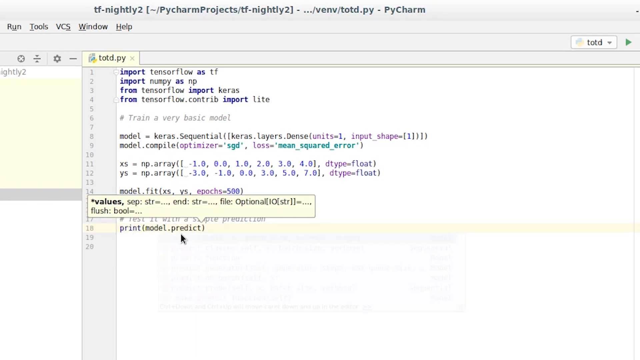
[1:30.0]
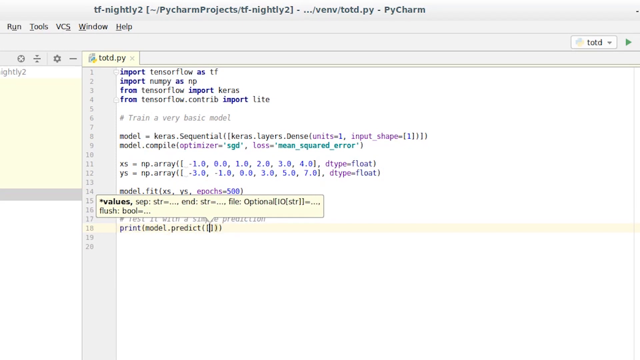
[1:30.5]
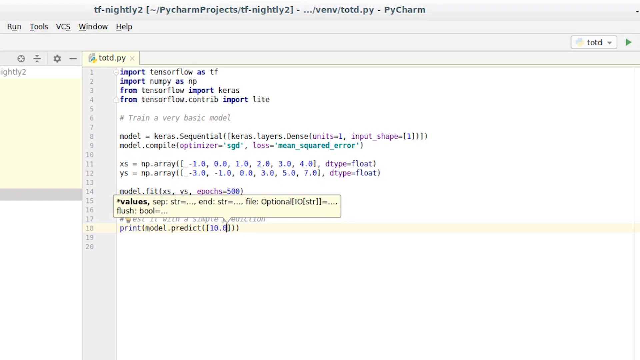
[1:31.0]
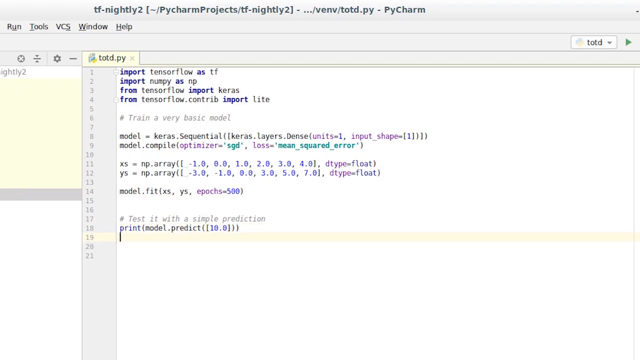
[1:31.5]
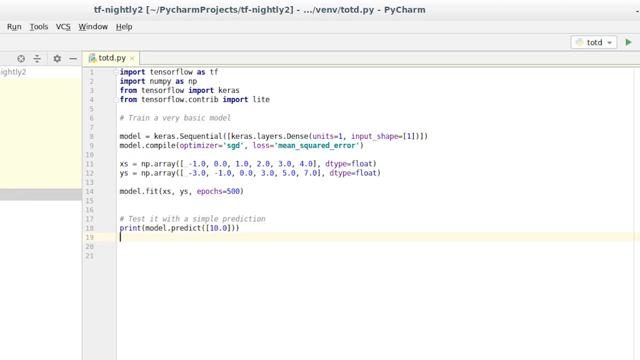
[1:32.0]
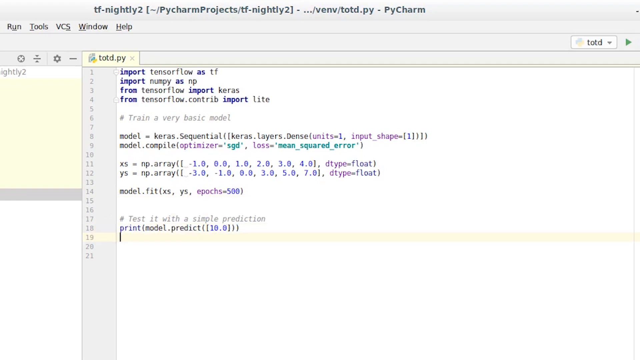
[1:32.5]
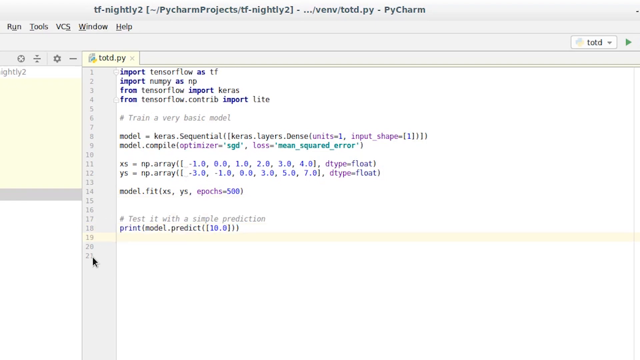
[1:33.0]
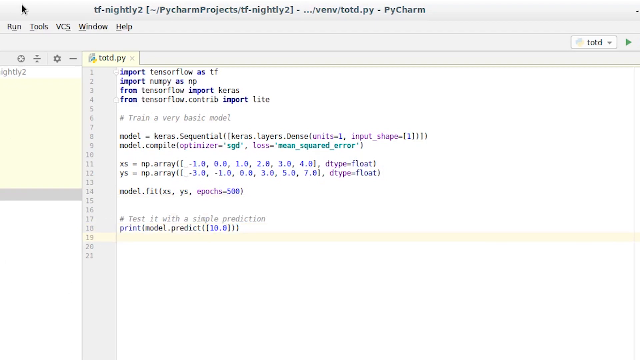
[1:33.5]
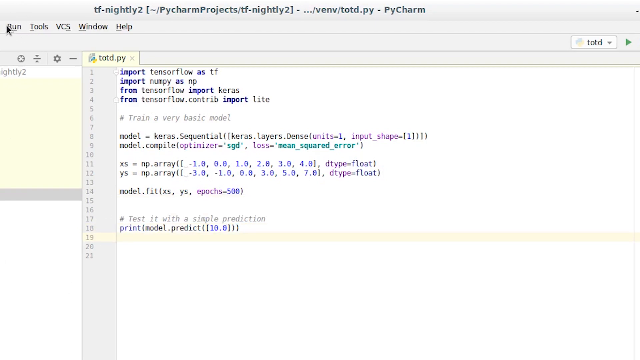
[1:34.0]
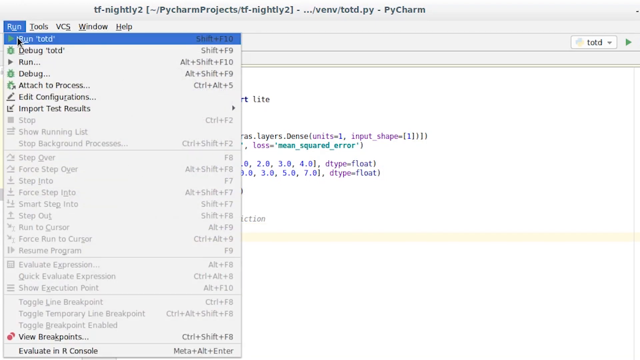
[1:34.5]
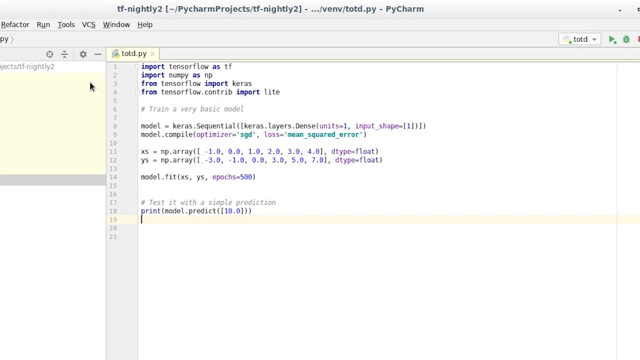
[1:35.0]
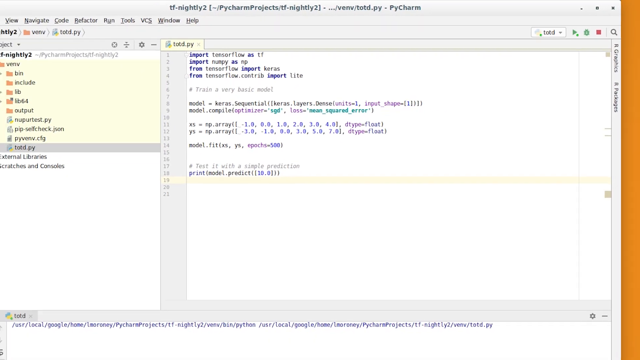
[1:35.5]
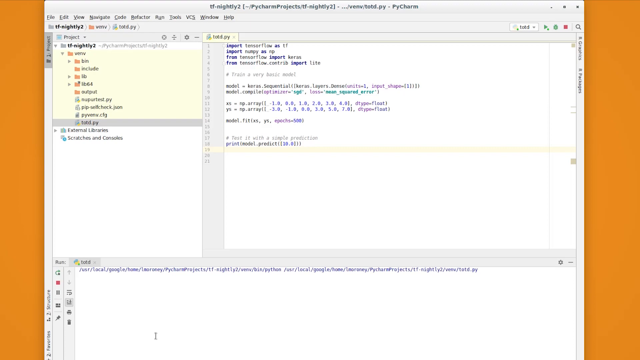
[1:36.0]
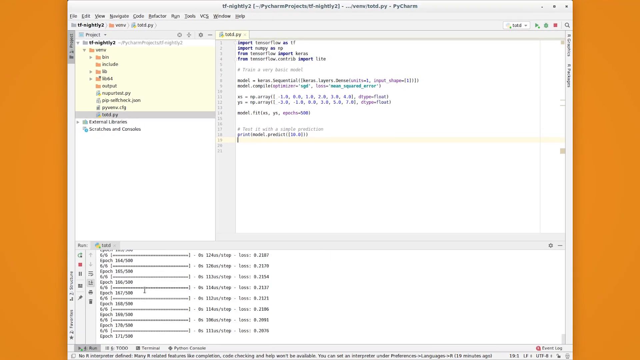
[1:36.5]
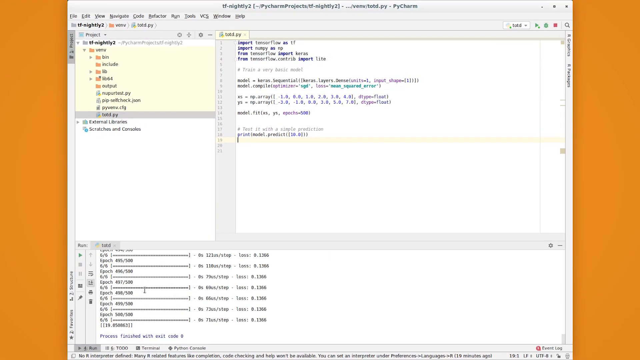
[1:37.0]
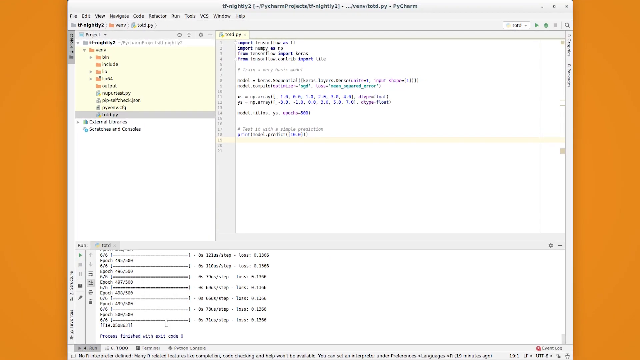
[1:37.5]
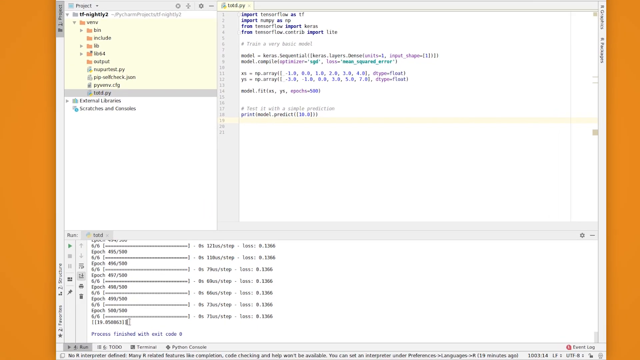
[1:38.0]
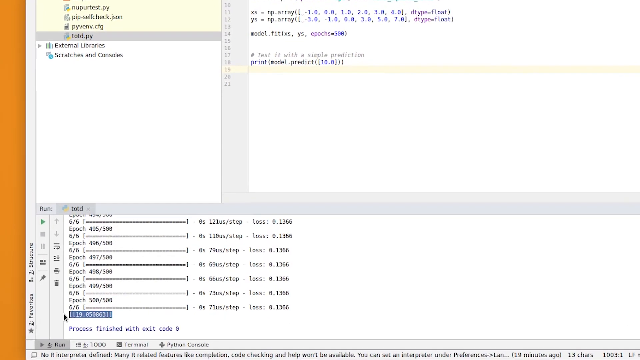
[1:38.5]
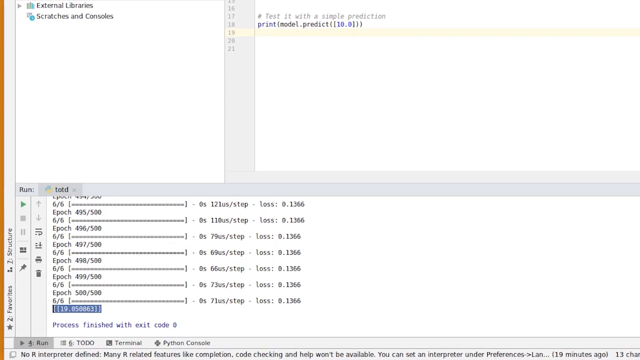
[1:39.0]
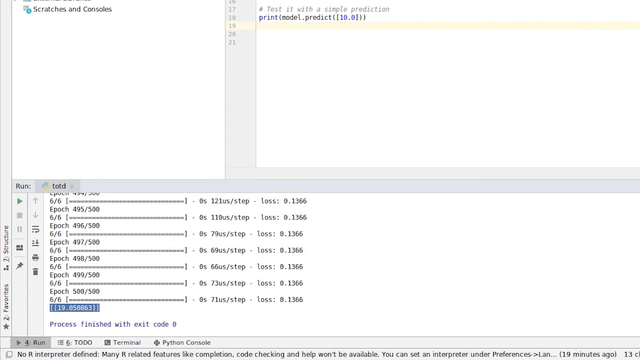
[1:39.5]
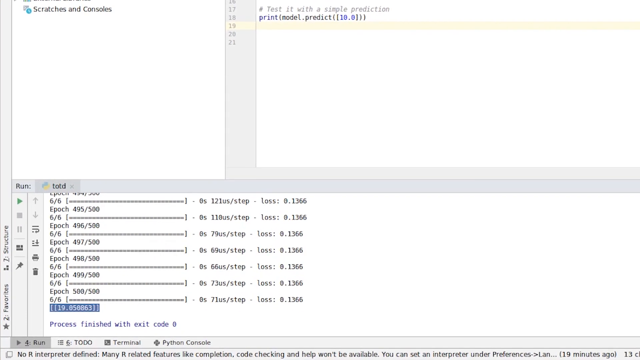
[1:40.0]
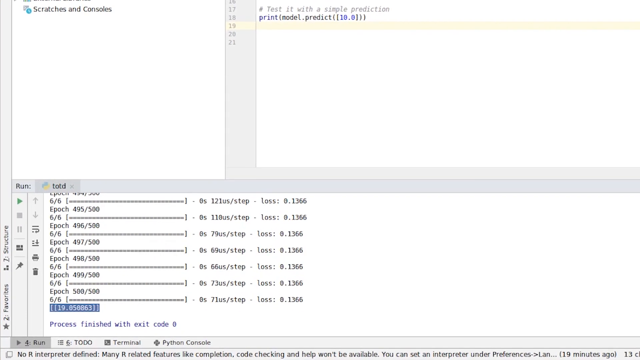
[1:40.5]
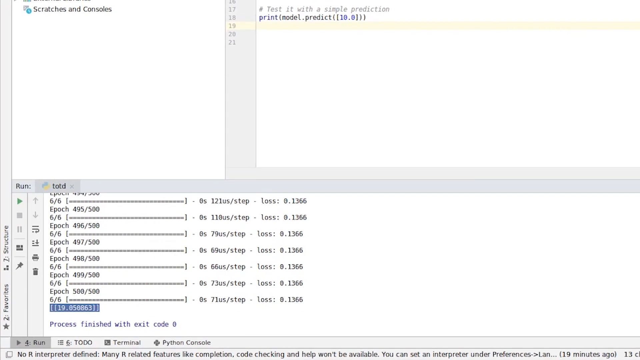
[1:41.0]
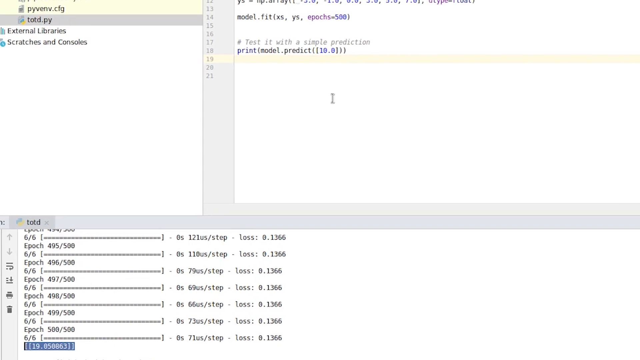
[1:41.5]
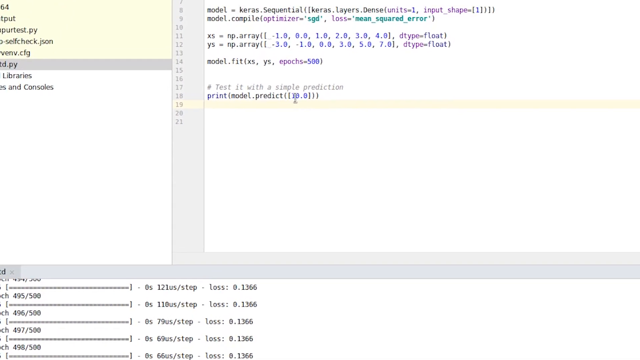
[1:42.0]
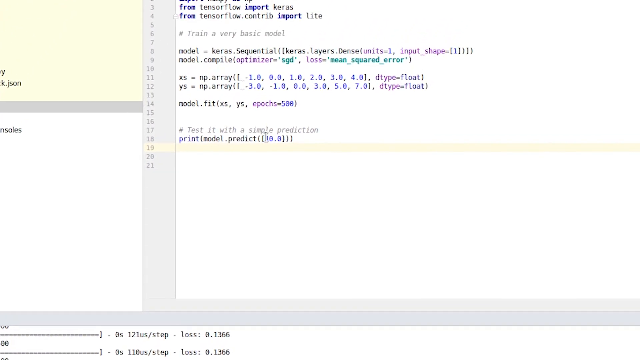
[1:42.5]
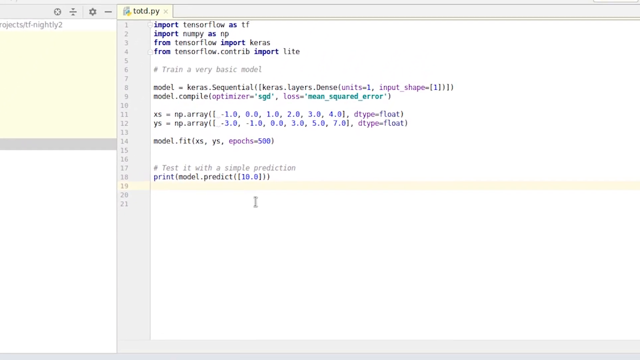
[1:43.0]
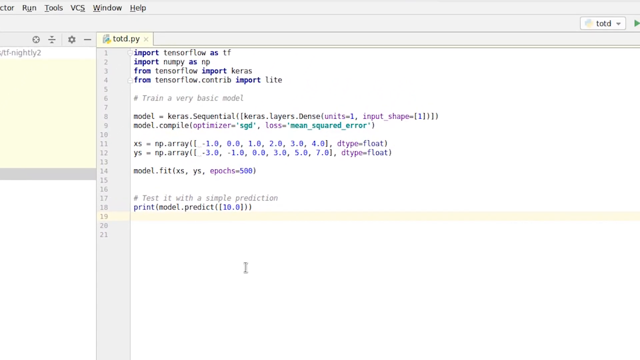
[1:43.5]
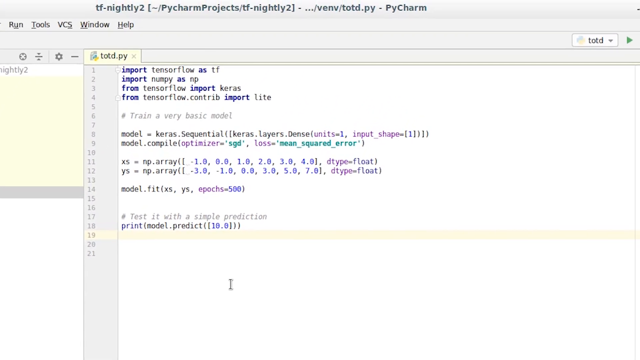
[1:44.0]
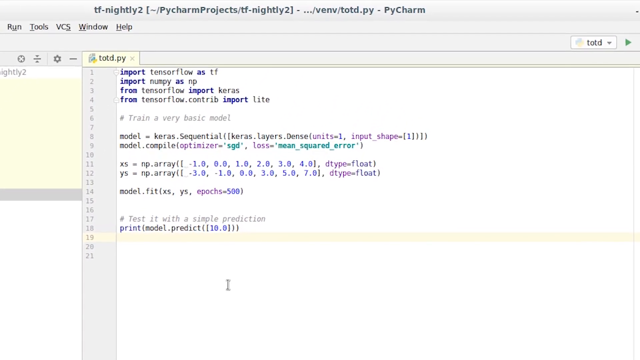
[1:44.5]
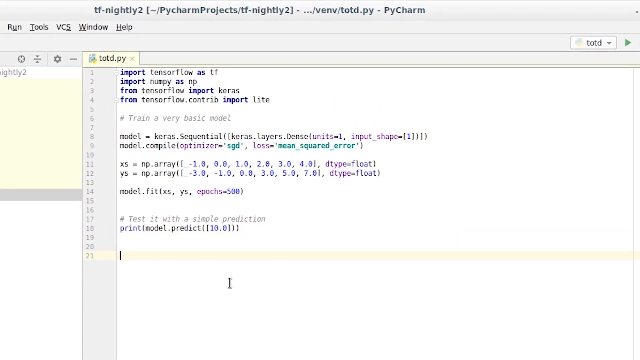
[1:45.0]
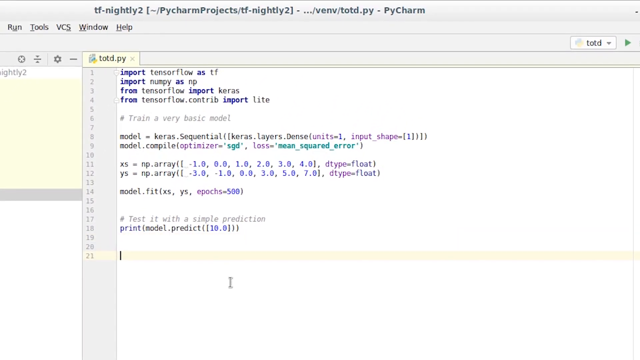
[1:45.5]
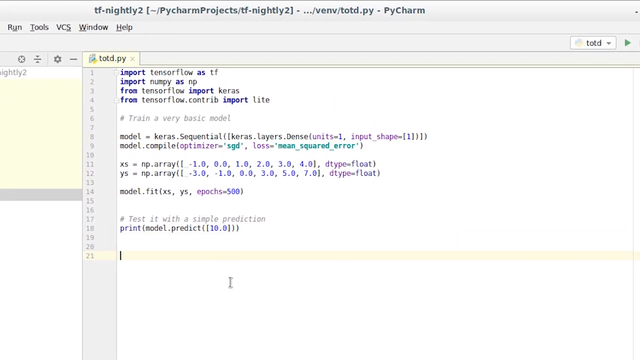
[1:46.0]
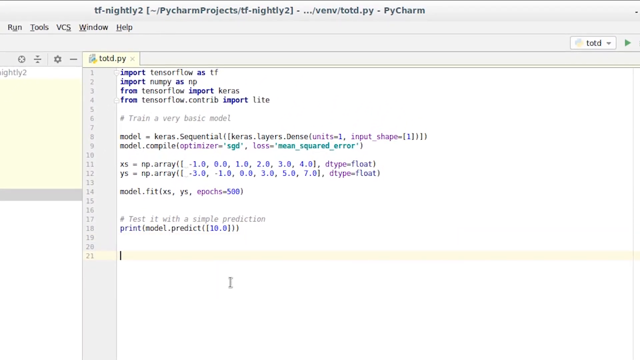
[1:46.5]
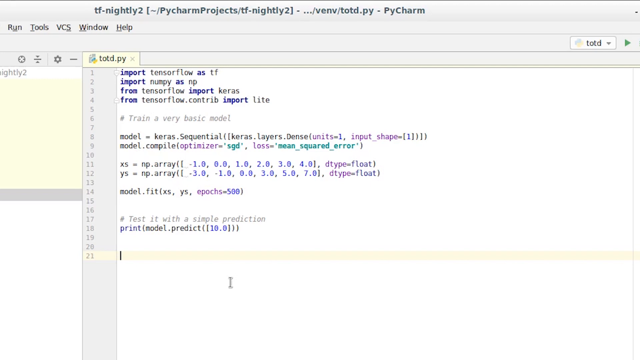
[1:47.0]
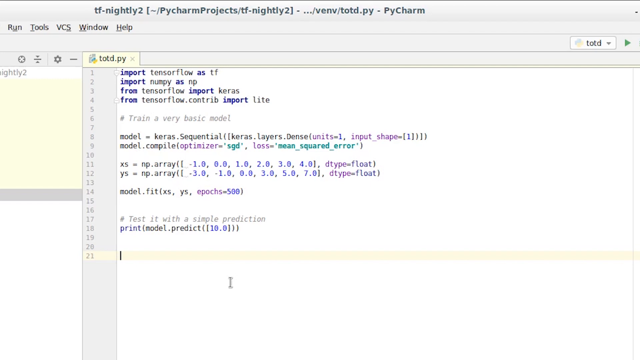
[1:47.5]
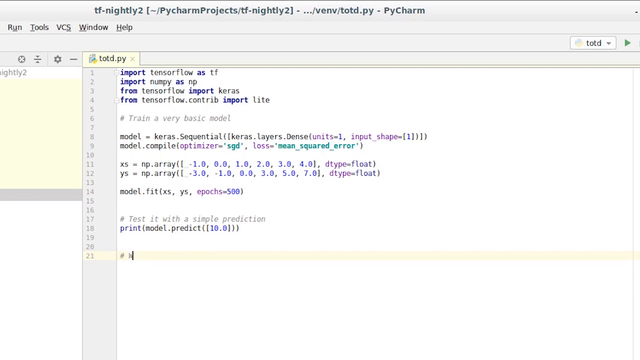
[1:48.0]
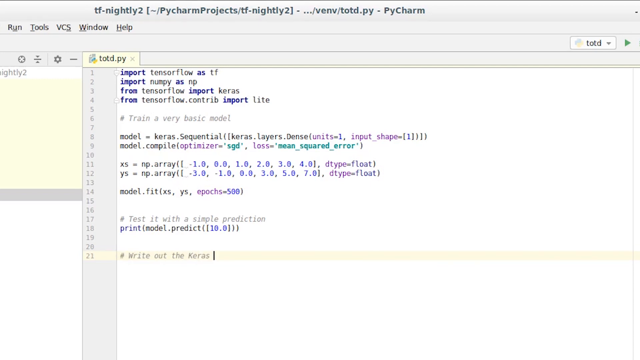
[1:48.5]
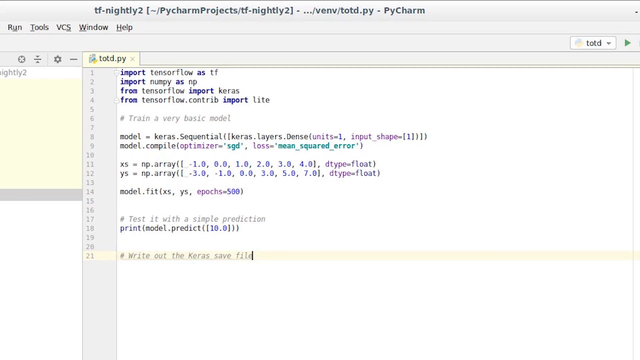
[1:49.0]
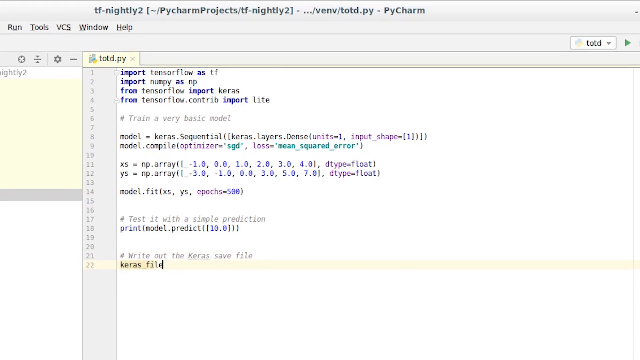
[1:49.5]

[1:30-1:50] Someone is on a document labeled "TF Nightly 2" under "PyCharm Projects." The code includes the lines "train a very basic model" and "test it with a simple prediction." The person runs the code, and more numbers appear at the bottom. A further line reads "write out the Keras save file."